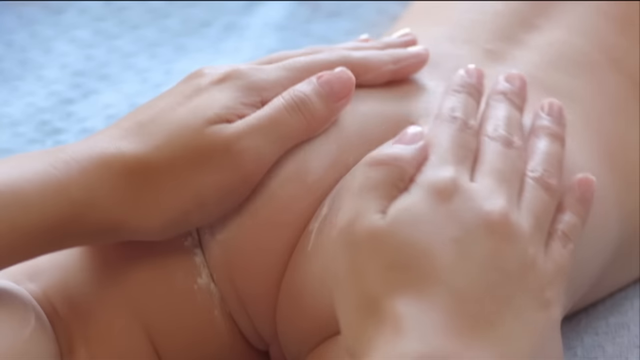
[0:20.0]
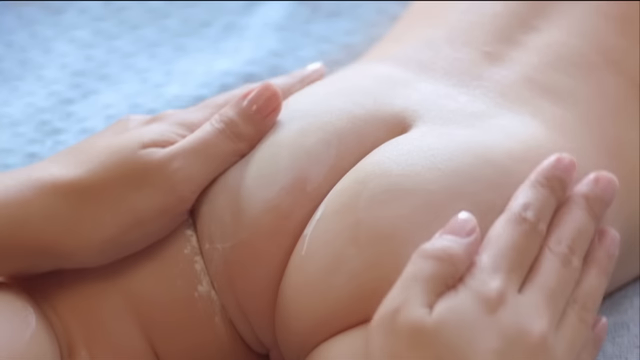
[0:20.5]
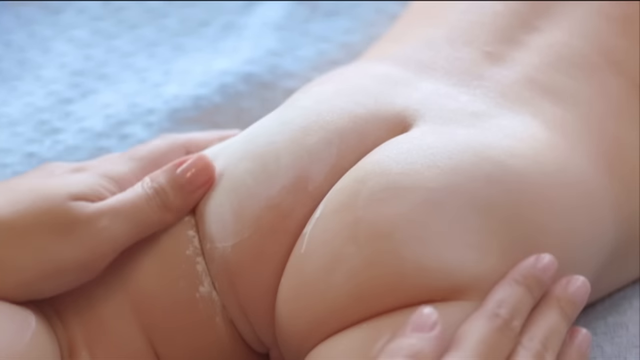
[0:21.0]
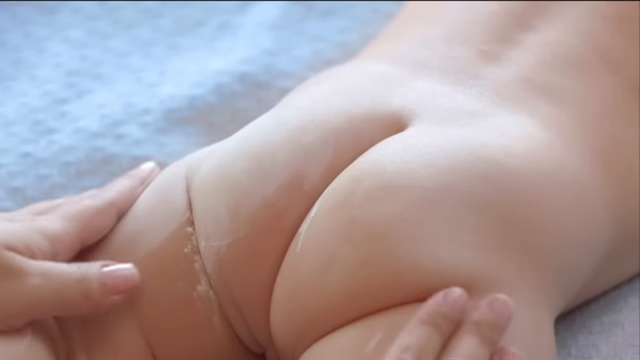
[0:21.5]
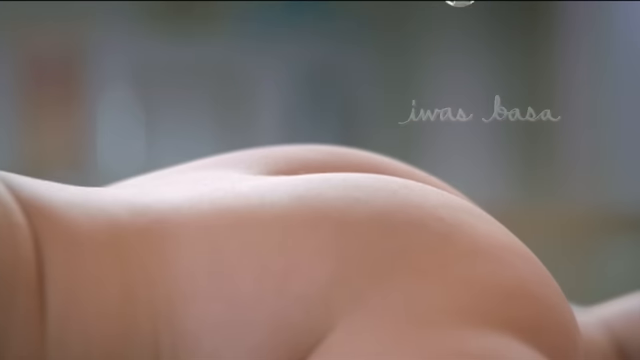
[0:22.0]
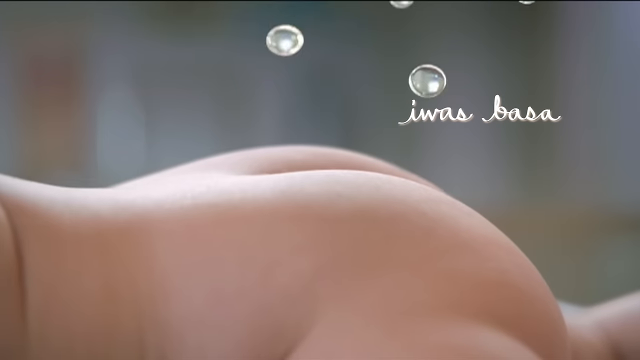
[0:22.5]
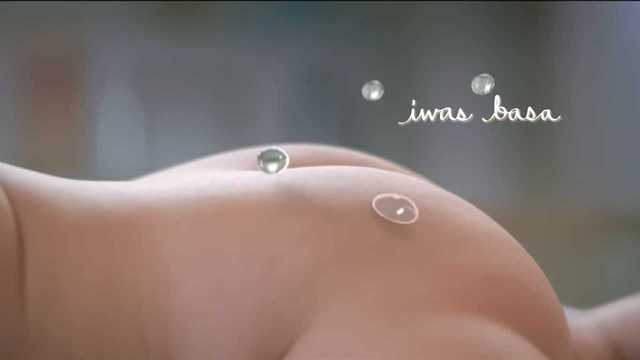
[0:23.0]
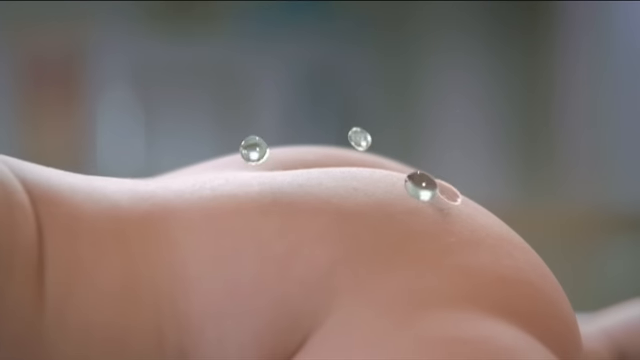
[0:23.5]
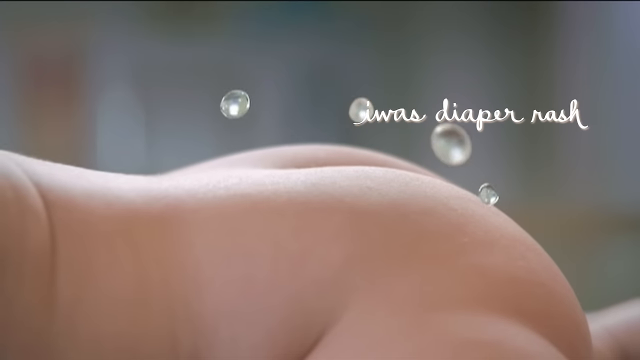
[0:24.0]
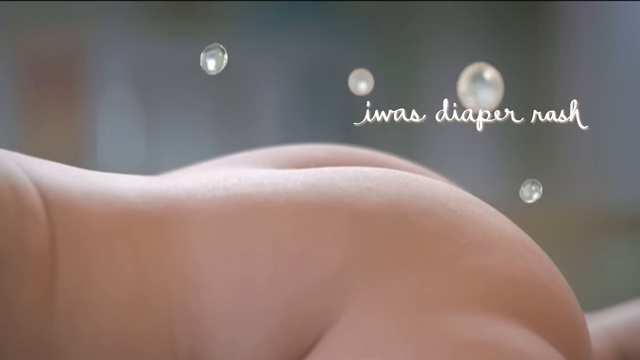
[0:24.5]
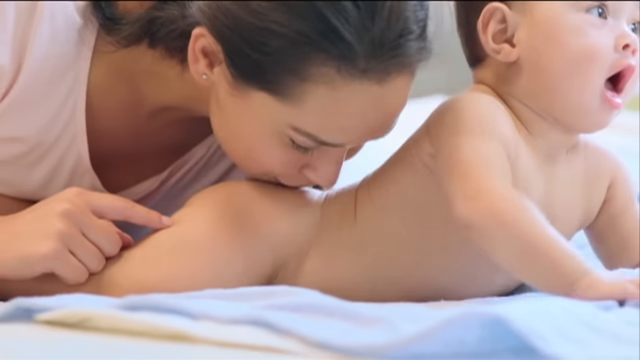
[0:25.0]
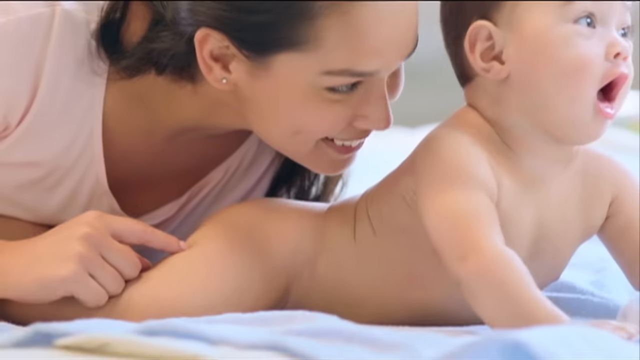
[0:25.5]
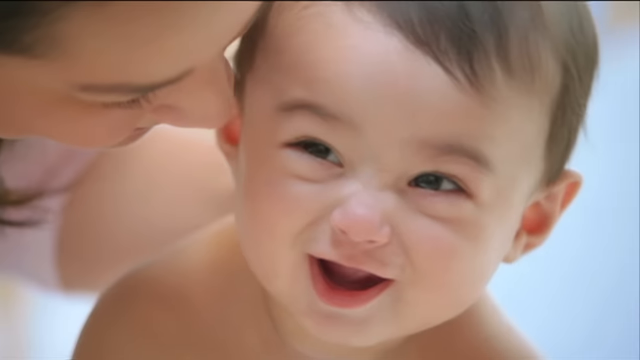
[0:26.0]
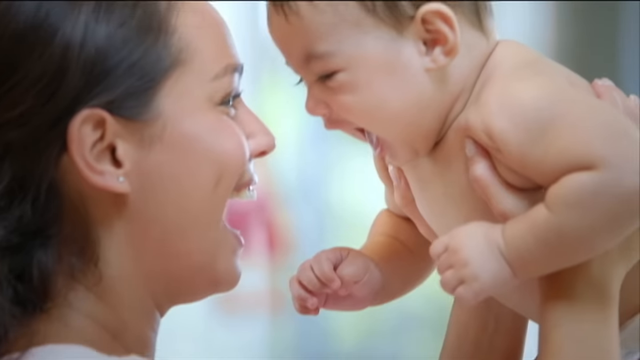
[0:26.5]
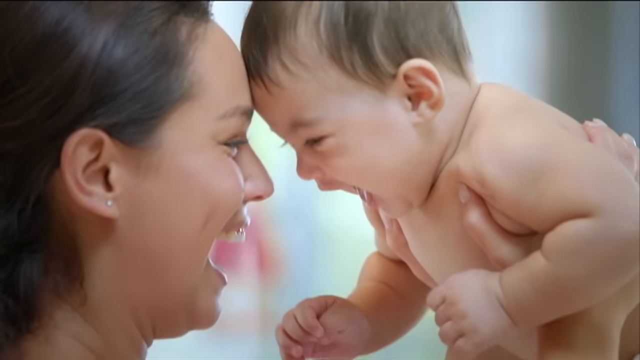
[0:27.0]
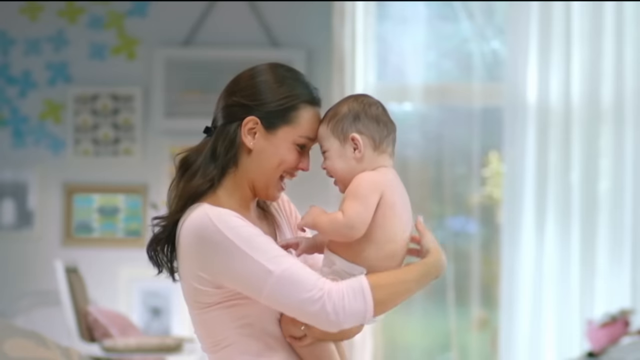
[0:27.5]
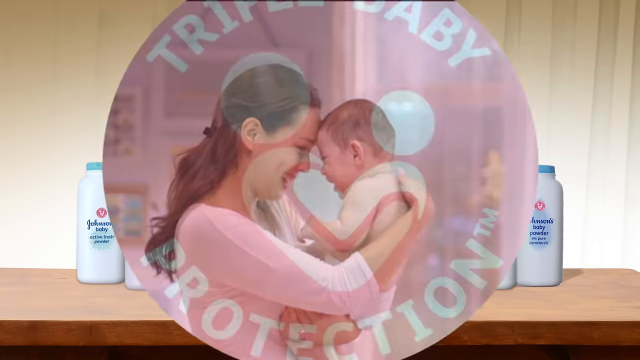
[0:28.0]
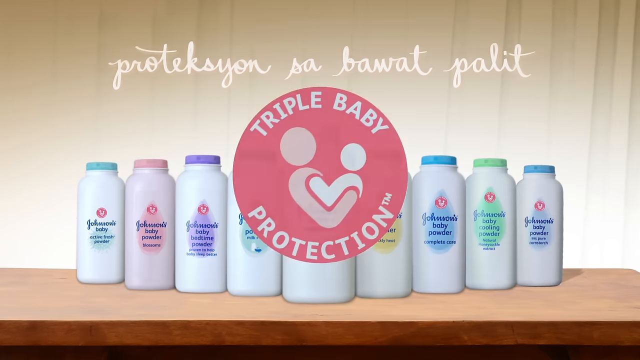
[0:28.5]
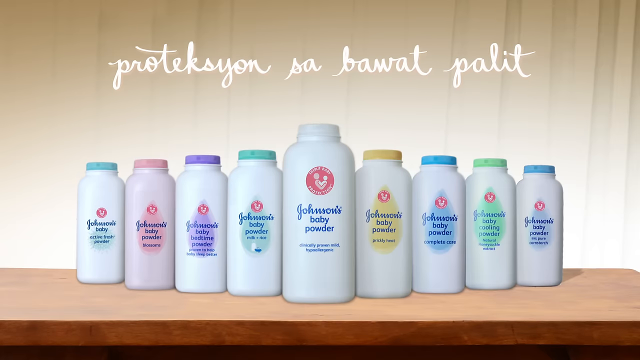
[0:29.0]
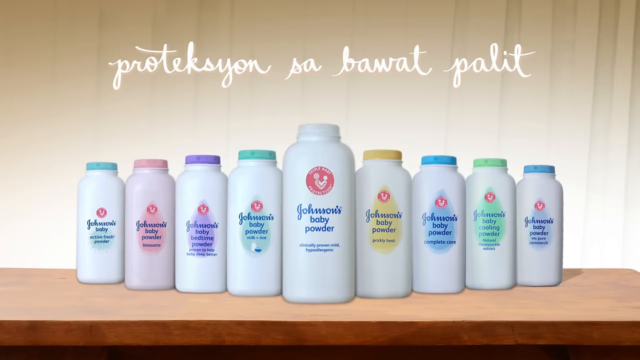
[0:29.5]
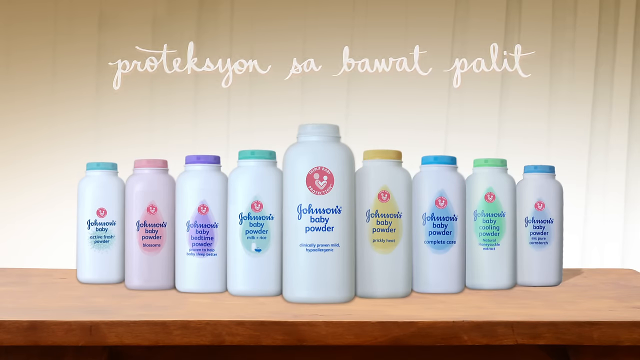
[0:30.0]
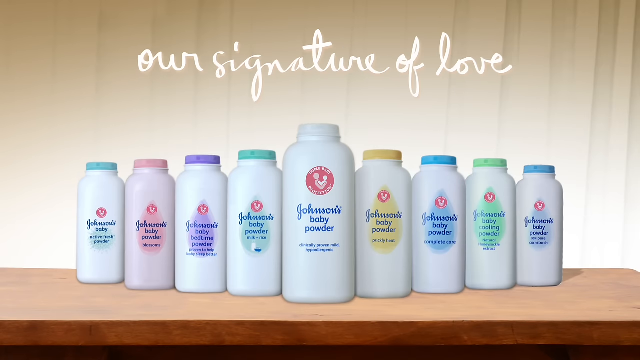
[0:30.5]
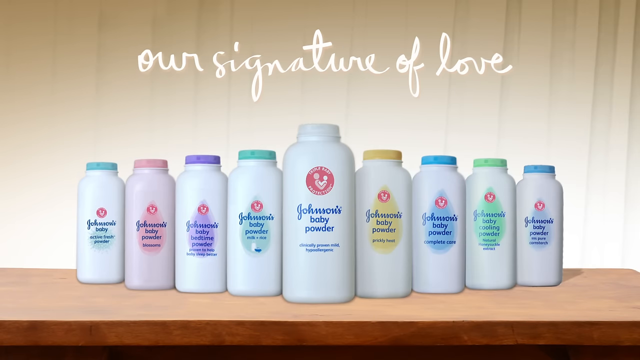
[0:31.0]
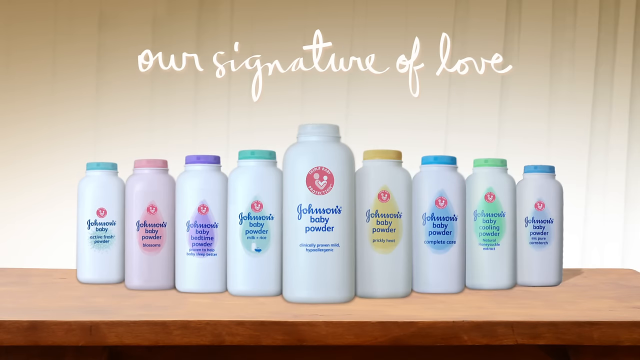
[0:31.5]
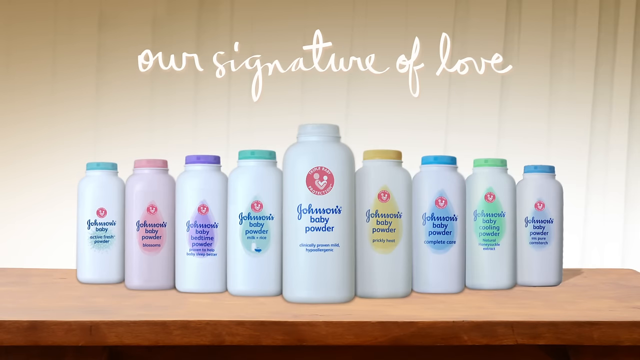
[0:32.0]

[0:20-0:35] The mother's hands rub Johnson & Johnson on the baby's palms, and the baby shows a lot of happiness. In the last part, different types of Johnson & Johnson baby powder are lined up in different flavors, with a bigger one in between the other four on the other side. The text "our signature of love" is written on the screen.